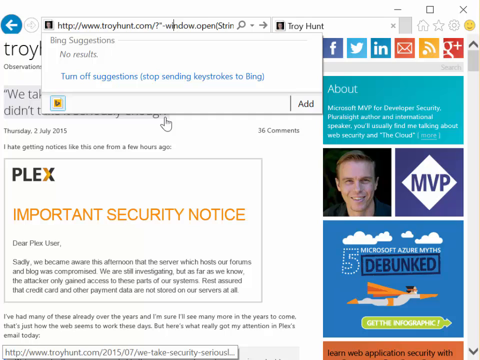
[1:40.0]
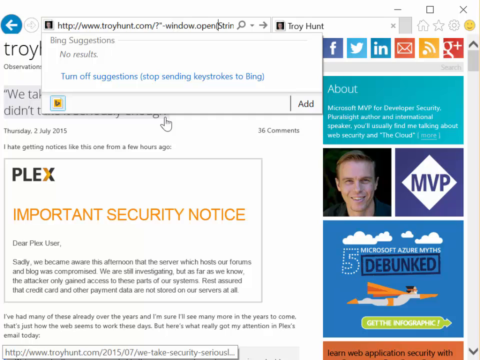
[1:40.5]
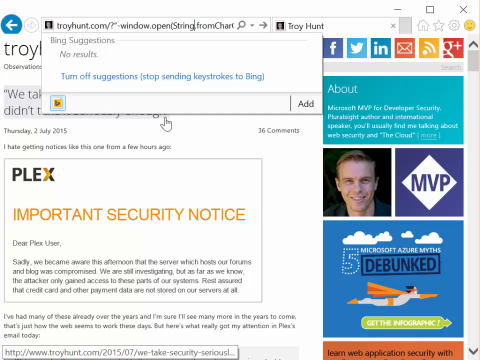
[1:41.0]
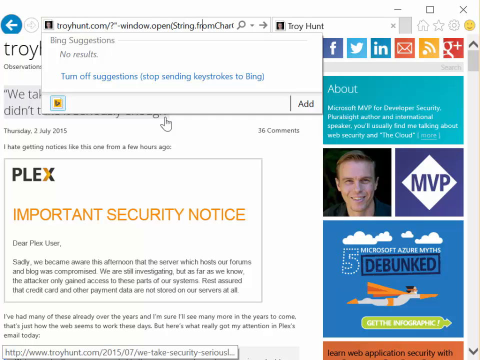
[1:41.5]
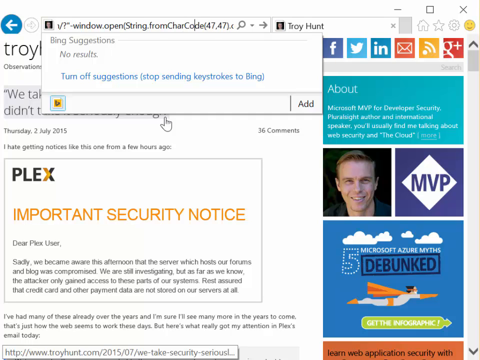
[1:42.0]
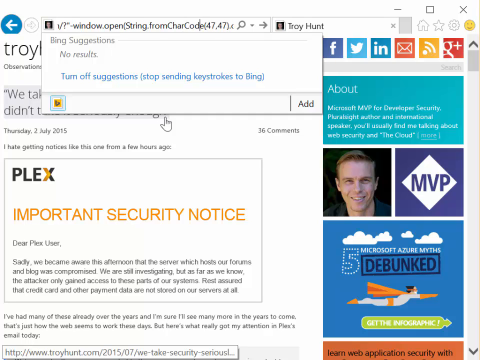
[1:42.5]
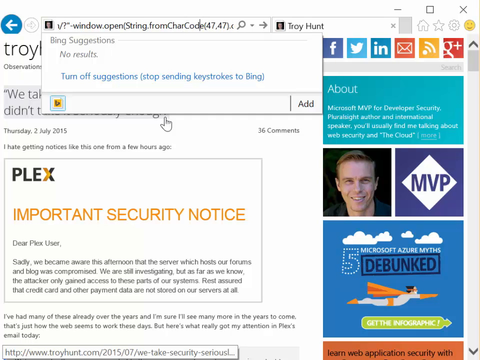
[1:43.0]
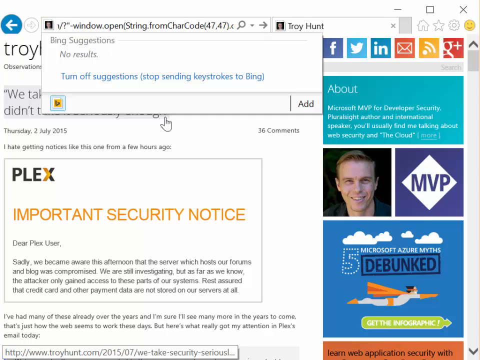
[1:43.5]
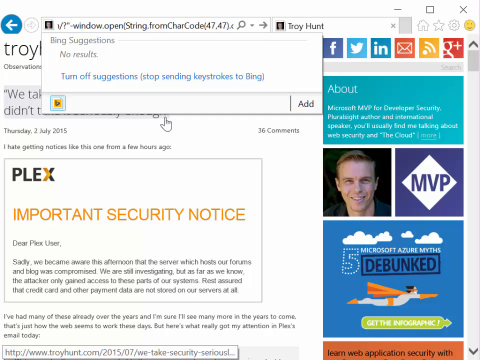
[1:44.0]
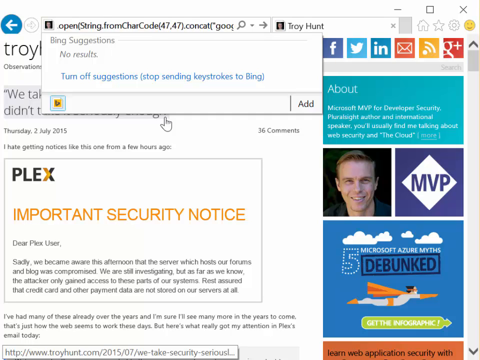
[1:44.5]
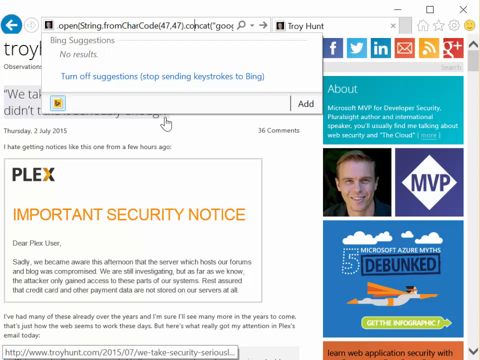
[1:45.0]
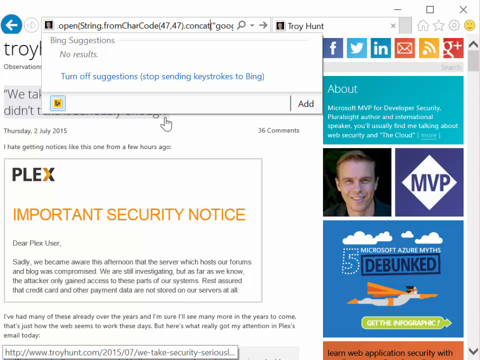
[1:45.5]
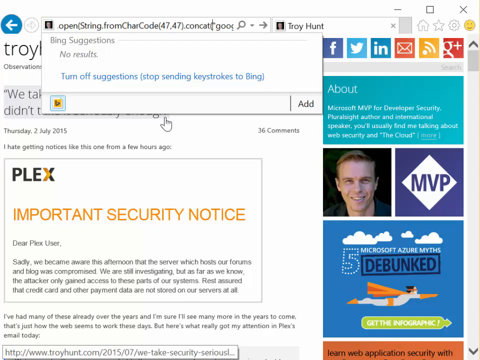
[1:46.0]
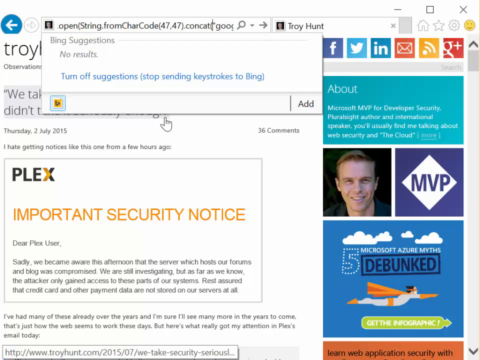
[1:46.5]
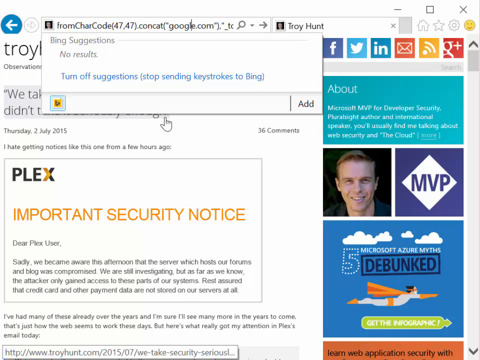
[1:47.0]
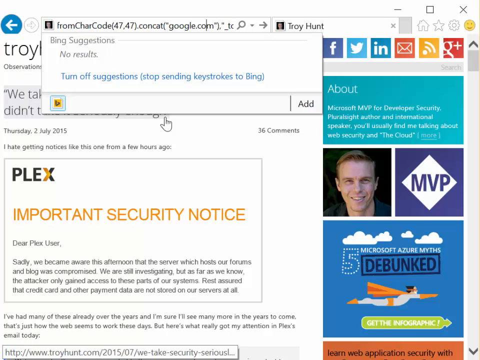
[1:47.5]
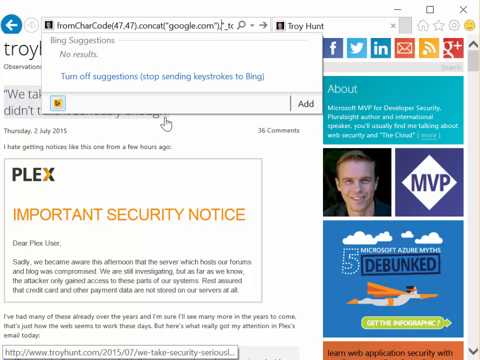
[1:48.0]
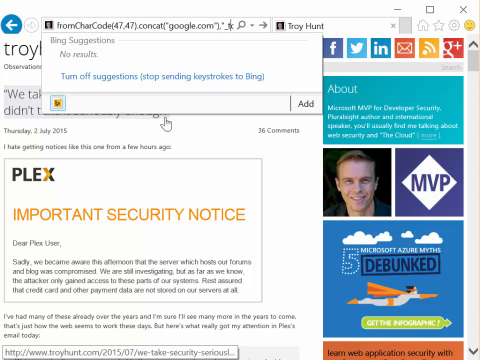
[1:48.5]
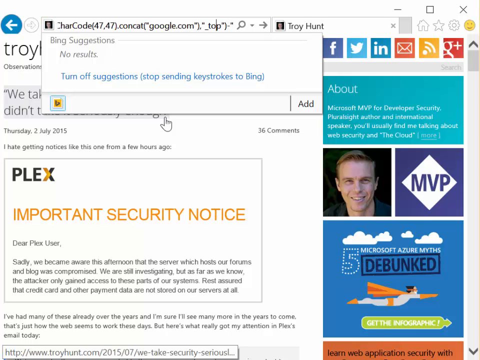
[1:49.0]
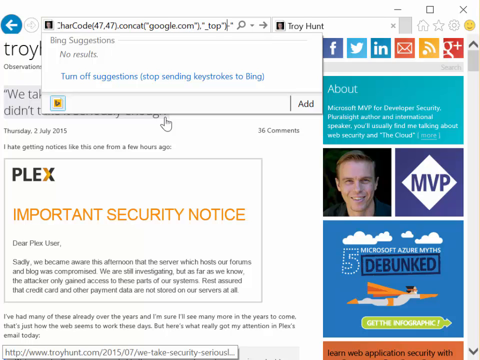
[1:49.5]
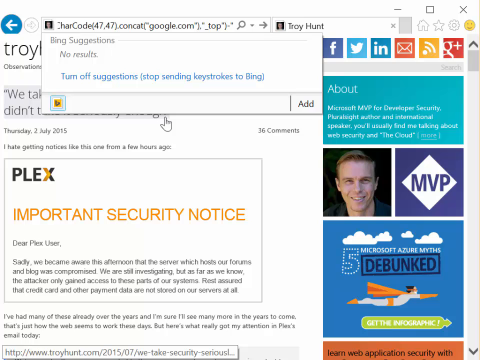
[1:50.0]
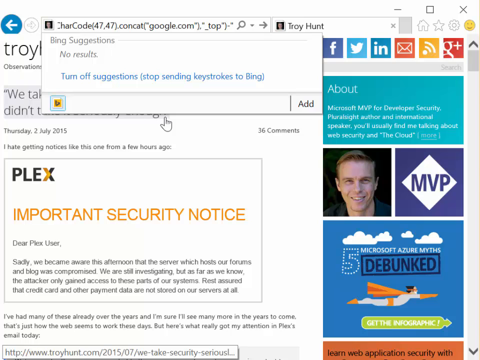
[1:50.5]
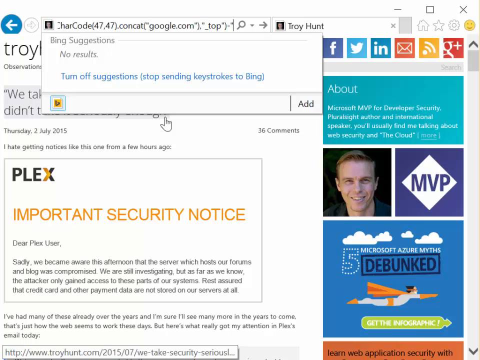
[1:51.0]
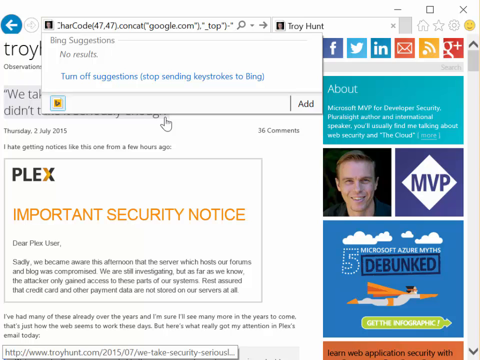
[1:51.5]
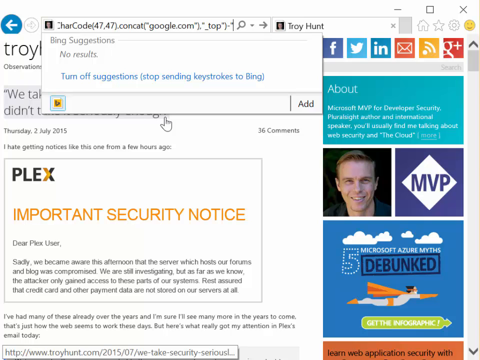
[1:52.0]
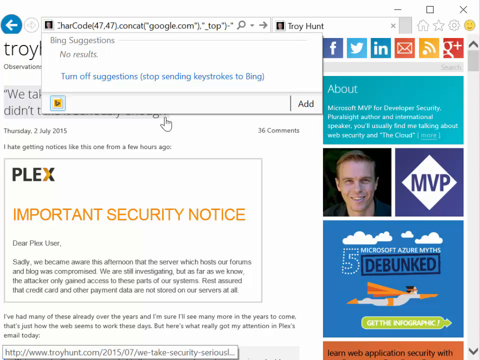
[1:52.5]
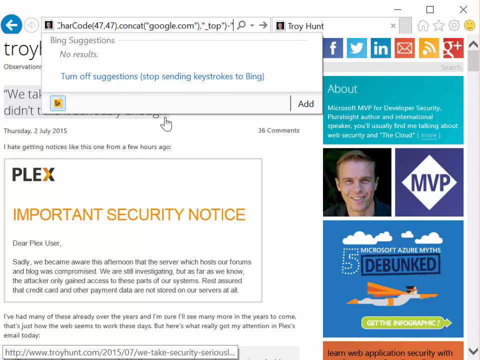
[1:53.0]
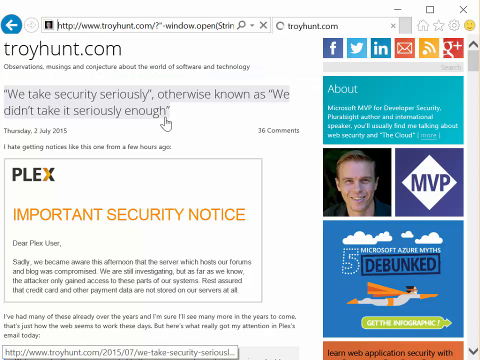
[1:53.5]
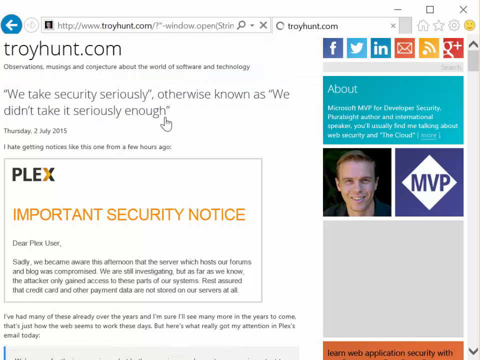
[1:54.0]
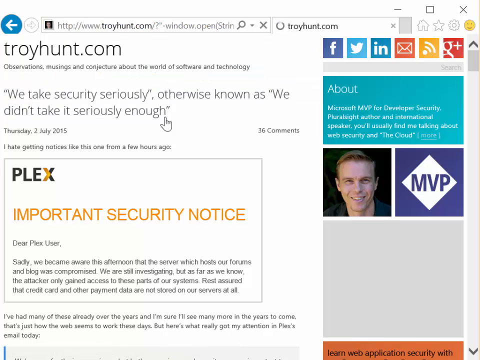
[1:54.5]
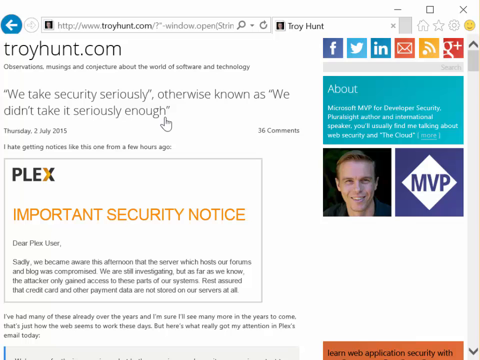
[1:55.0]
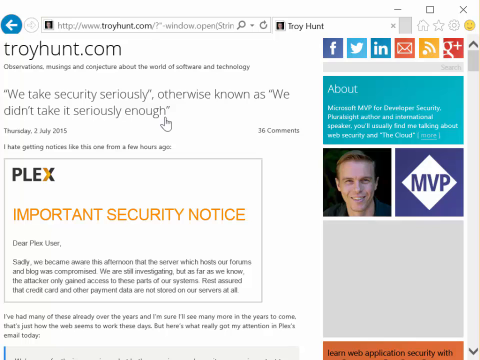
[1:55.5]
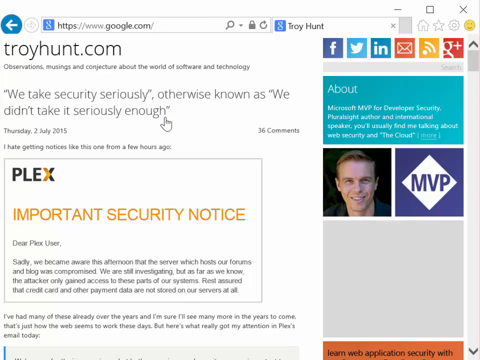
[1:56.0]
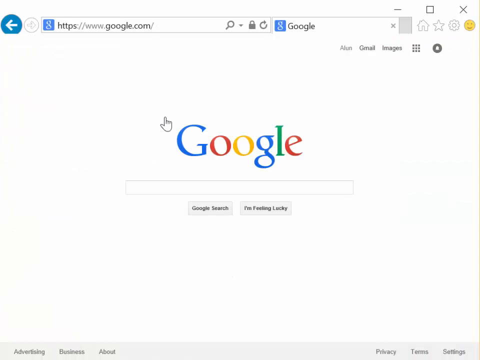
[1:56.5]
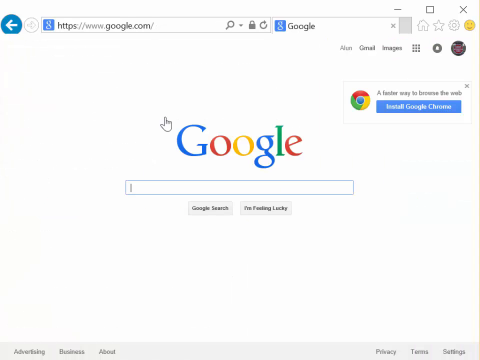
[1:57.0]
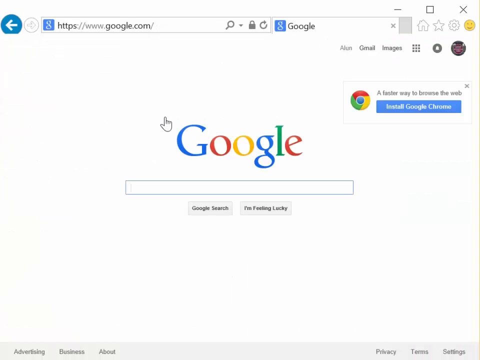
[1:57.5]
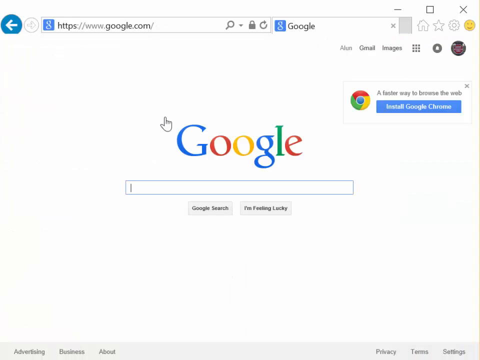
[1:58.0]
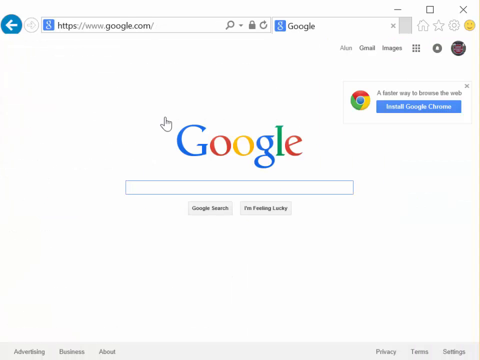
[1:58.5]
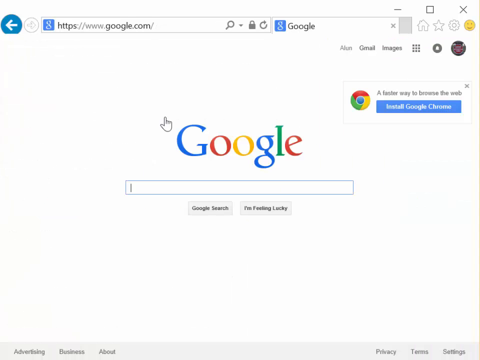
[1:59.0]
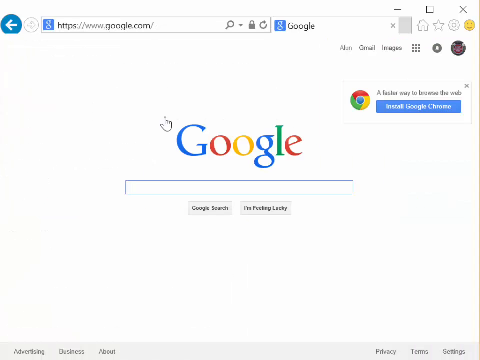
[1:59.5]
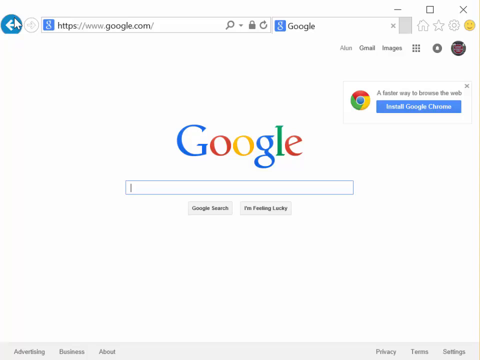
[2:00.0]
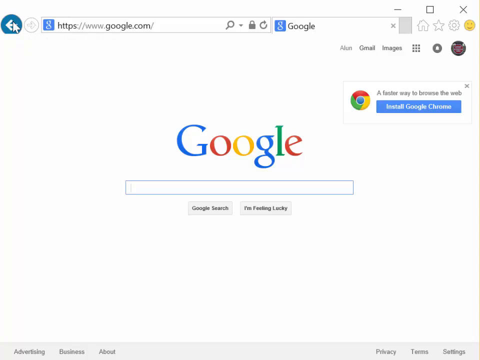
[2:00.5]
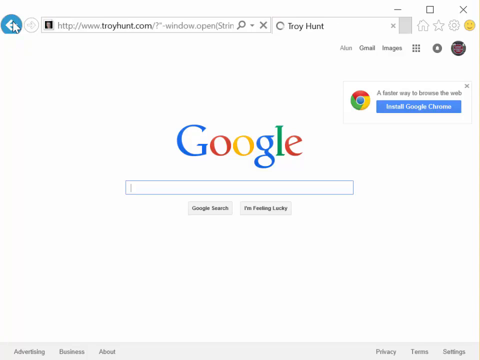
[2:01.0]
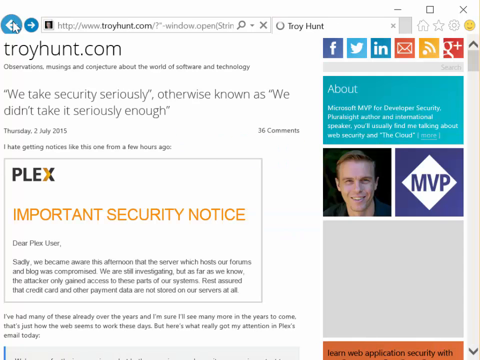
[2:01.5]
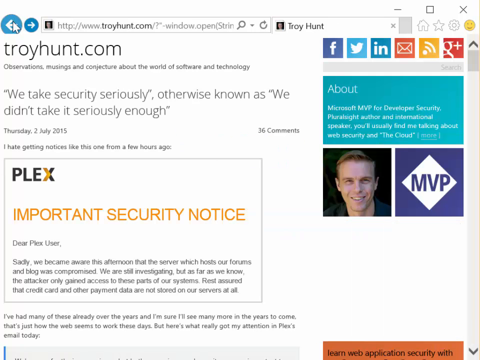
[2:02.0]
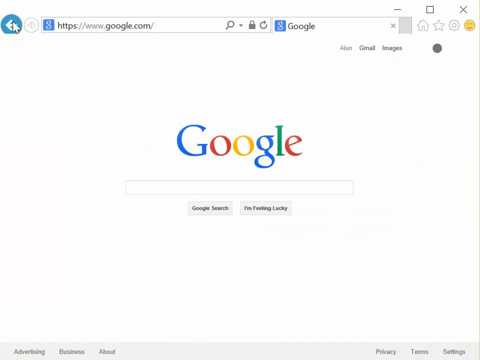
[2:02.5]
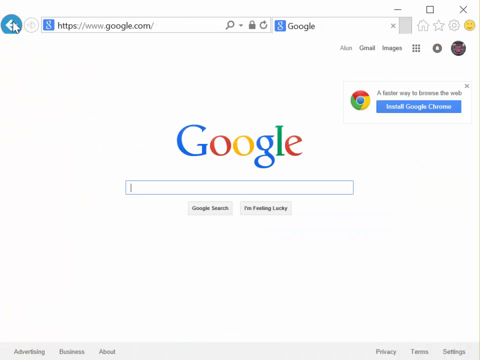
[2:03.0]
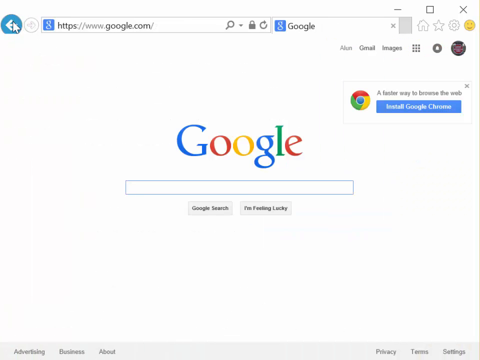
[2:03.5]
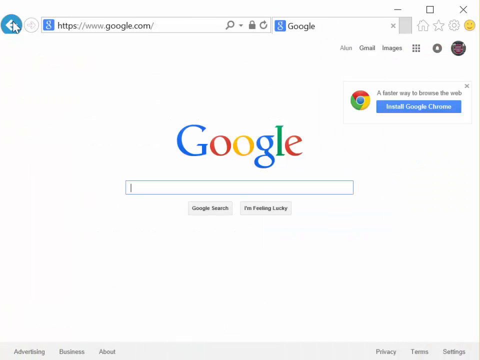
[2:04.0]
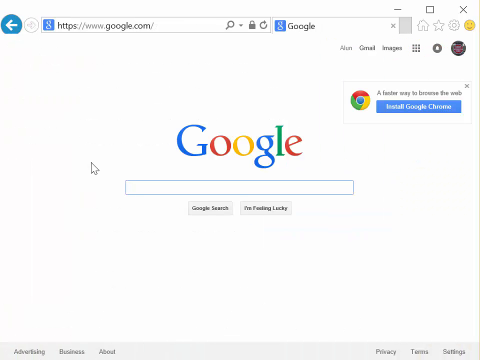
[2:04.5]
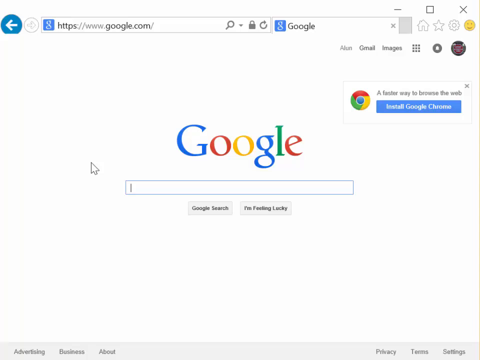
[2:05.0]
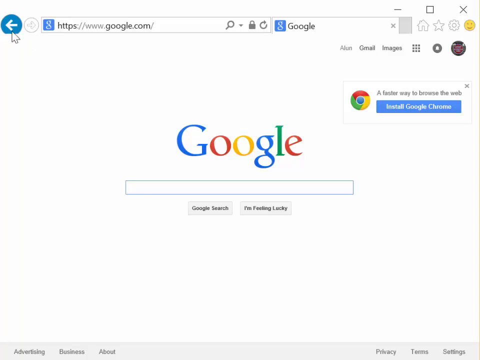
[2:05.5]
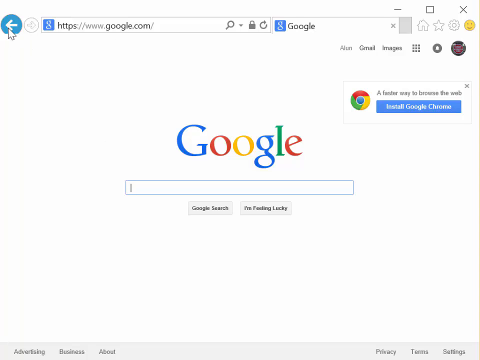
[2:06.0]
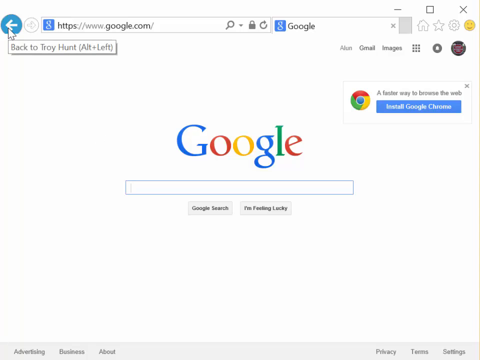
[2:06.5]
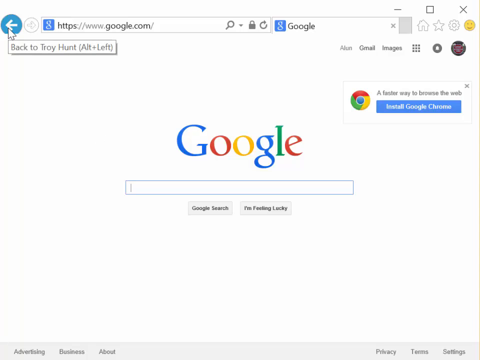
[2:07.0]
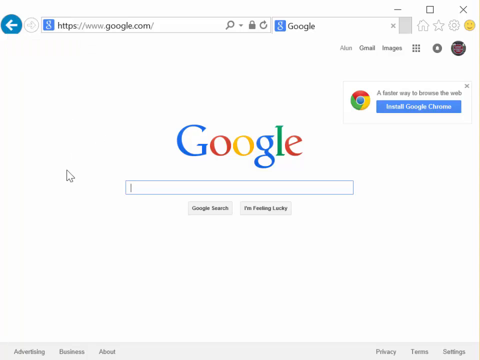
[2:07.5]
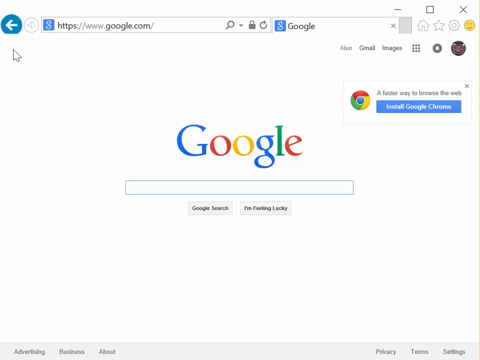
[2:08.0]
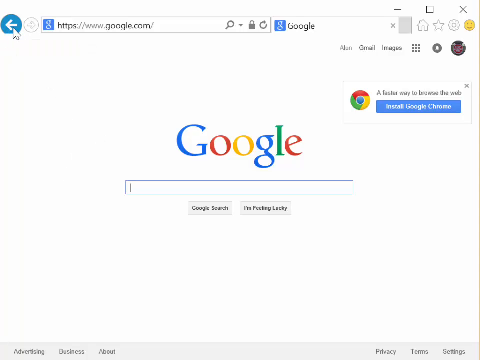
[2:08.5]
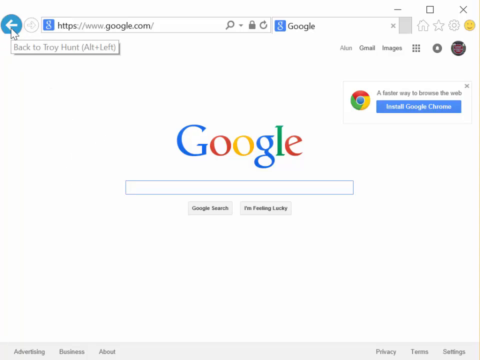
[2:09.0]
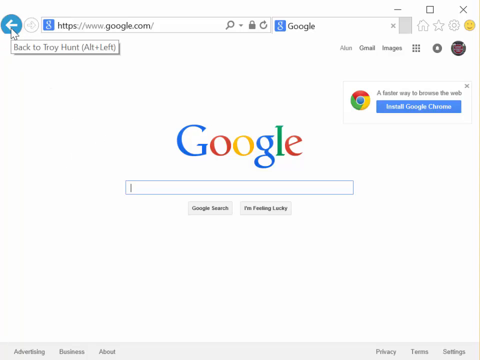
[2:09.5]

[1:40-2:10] Still on the troyhunt.com page, the user types instructions directly into the address bar. The text appears to include "windows.open" with "string" in parentheses, "from char code," and "concat," followed by "google.com" in parentheses and quotes; it looks like coding instructions entered into the address bar. The user then reaches the standard Google search home page, and the address bar at the top reads "google.com." They then use the back button to return to the page they were just on.